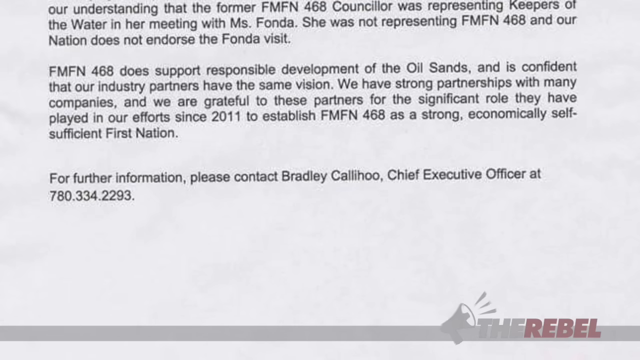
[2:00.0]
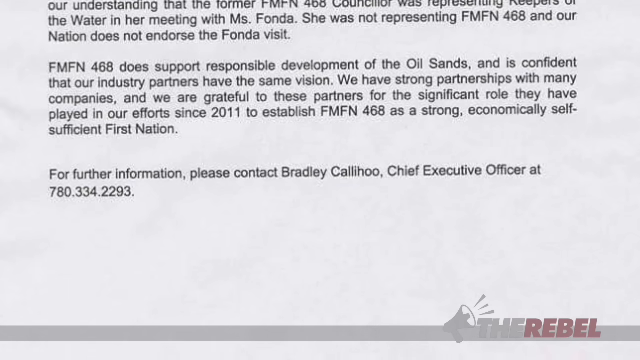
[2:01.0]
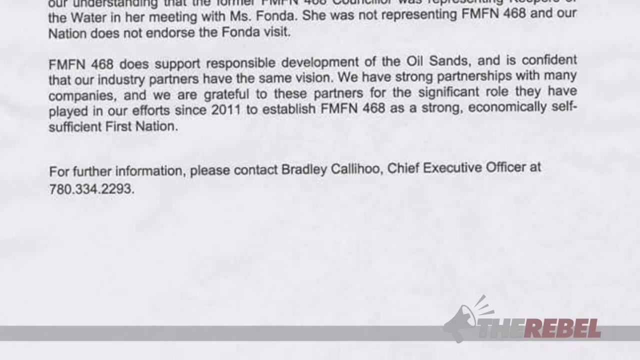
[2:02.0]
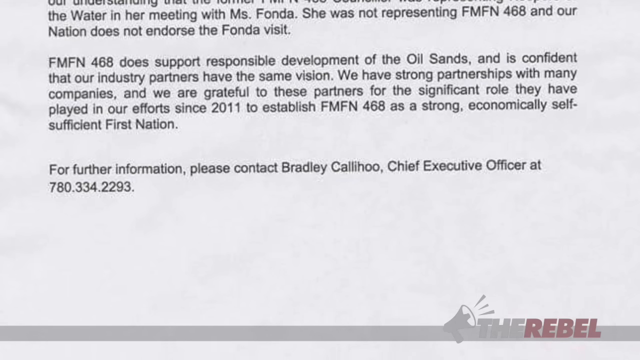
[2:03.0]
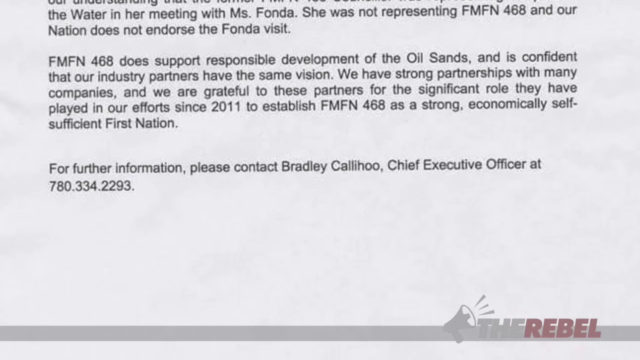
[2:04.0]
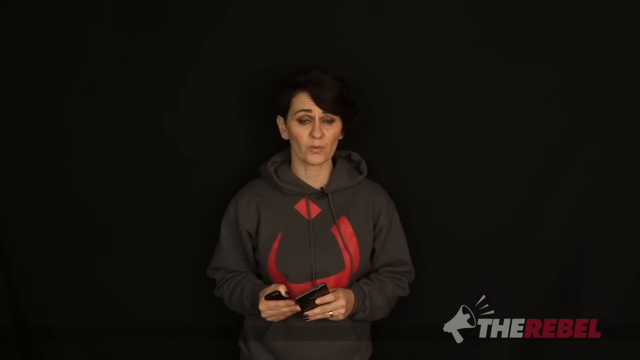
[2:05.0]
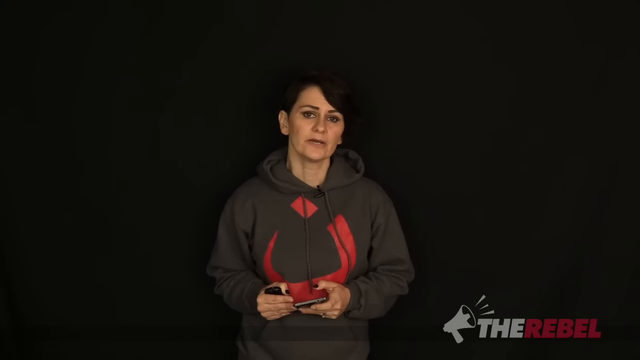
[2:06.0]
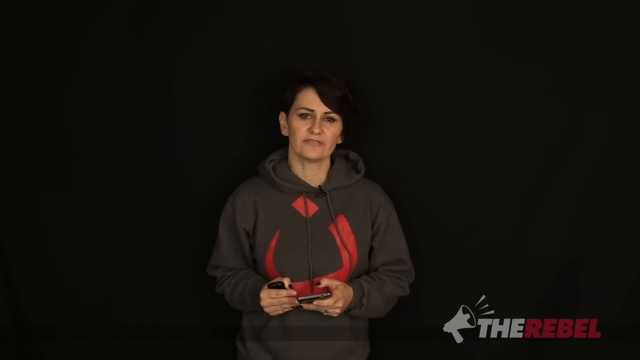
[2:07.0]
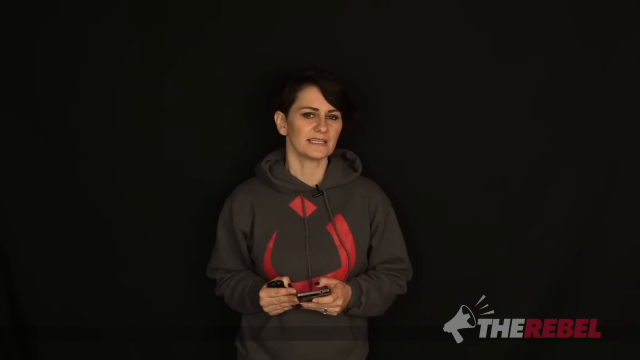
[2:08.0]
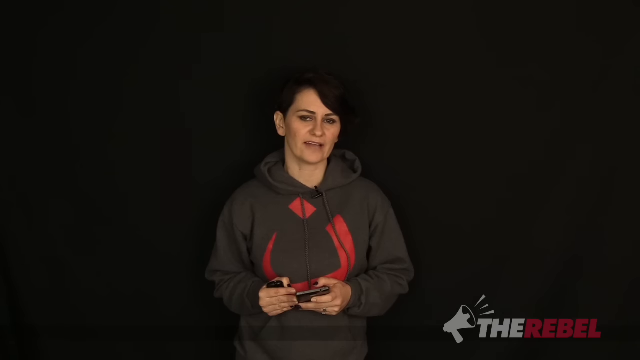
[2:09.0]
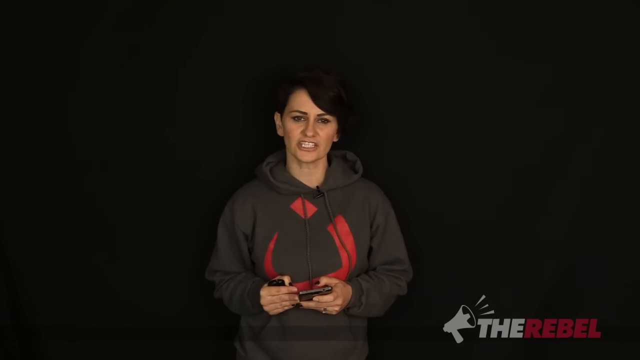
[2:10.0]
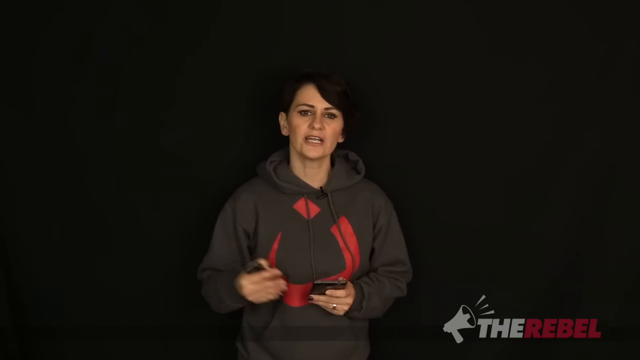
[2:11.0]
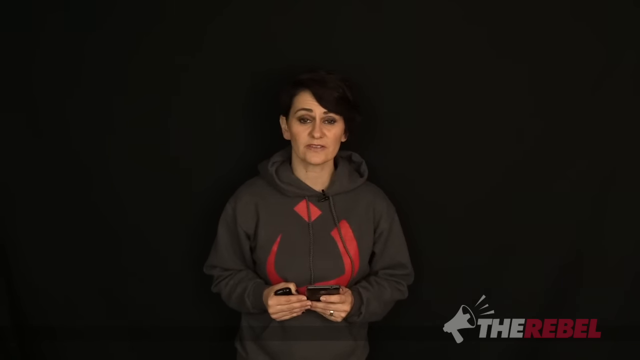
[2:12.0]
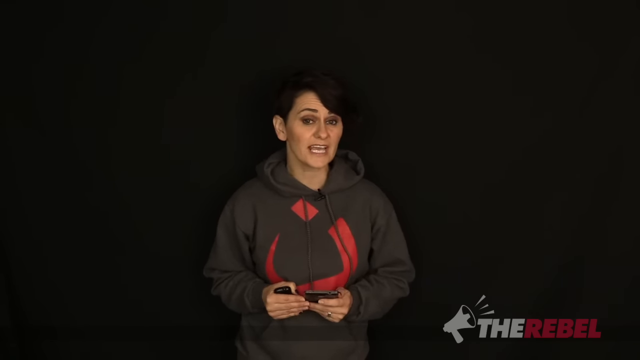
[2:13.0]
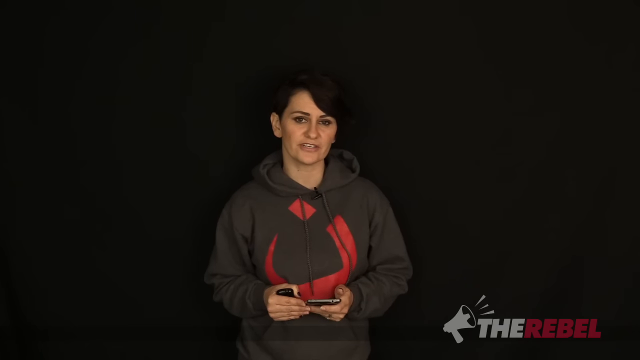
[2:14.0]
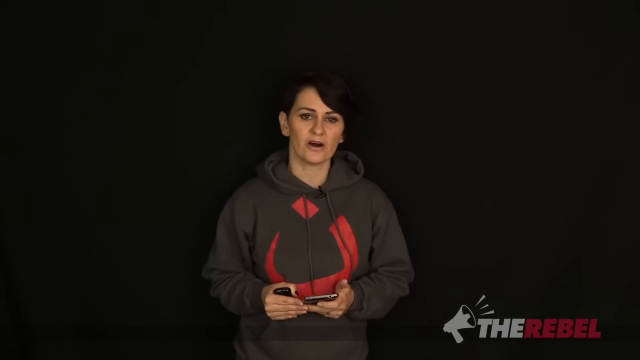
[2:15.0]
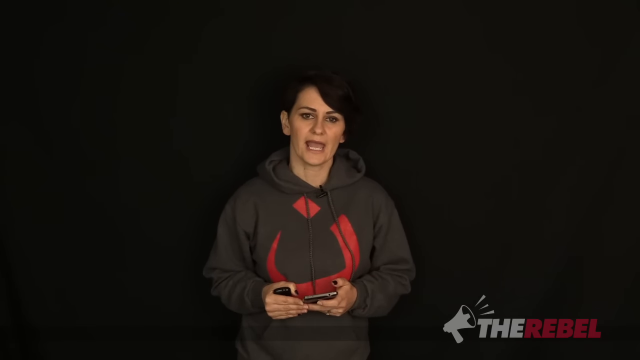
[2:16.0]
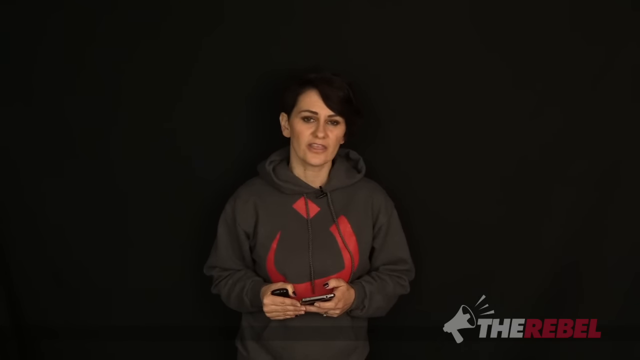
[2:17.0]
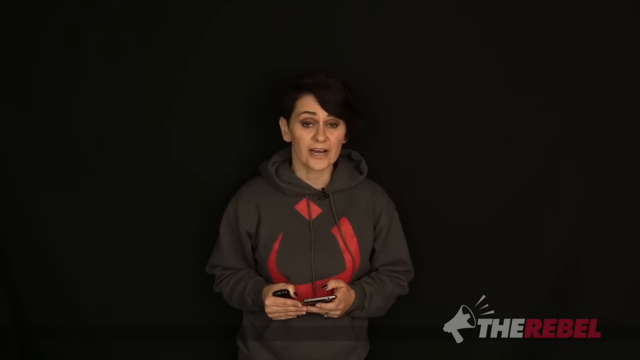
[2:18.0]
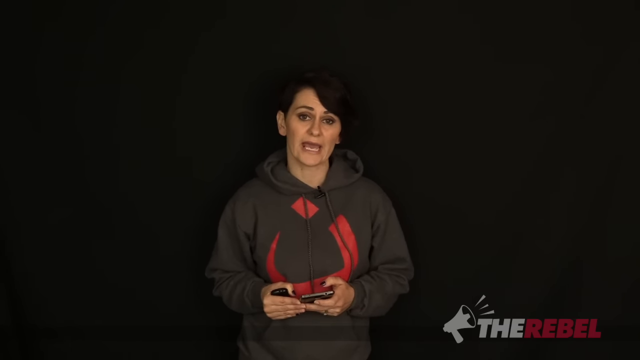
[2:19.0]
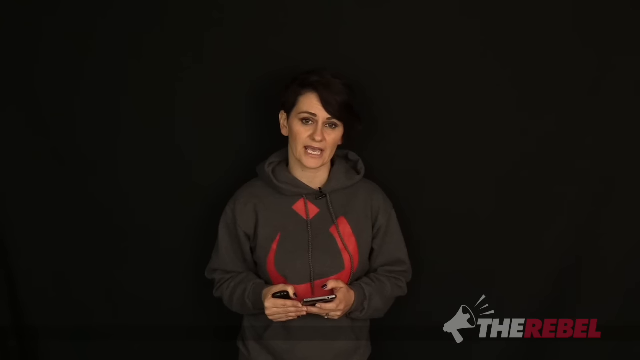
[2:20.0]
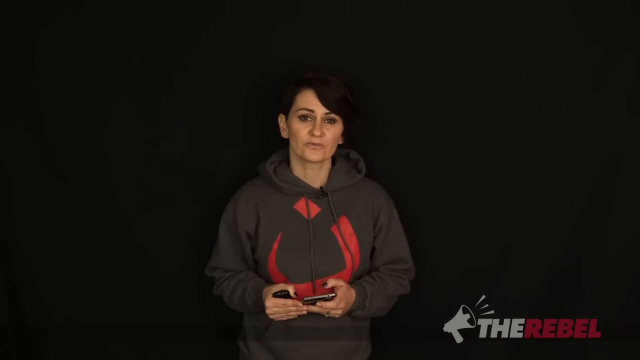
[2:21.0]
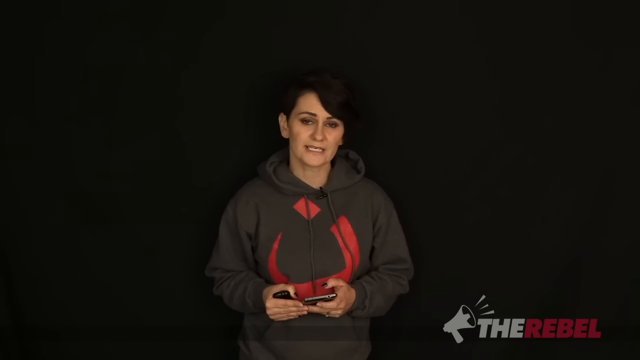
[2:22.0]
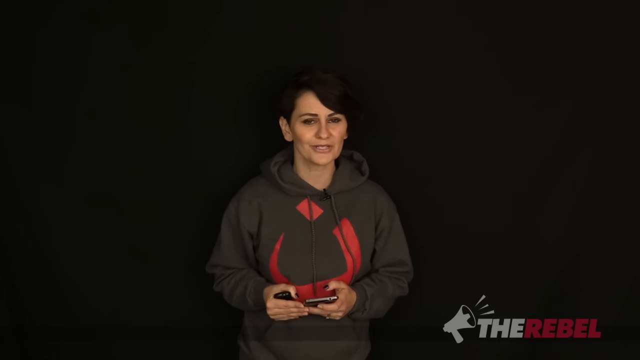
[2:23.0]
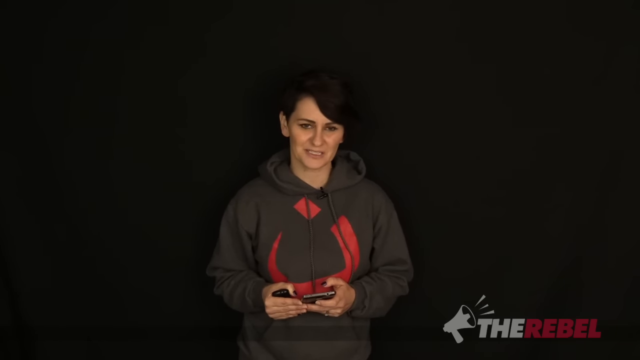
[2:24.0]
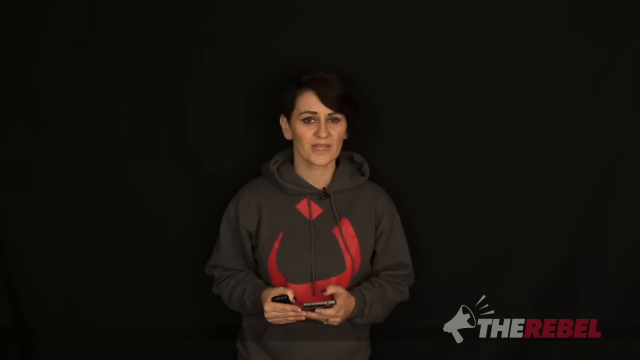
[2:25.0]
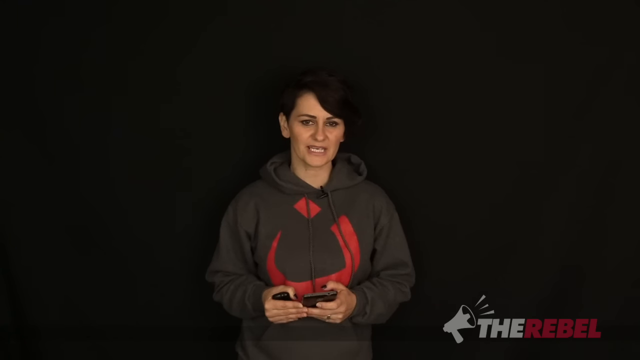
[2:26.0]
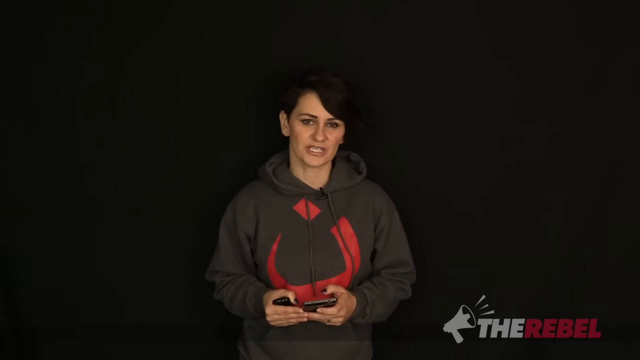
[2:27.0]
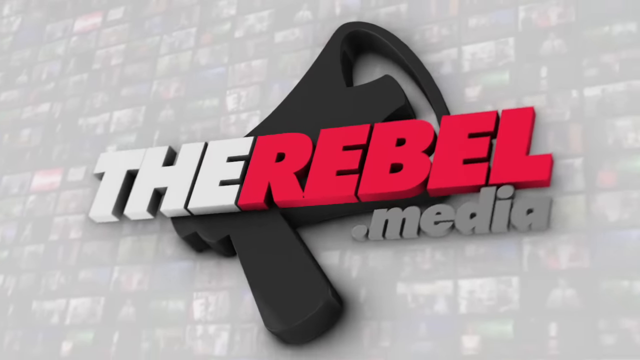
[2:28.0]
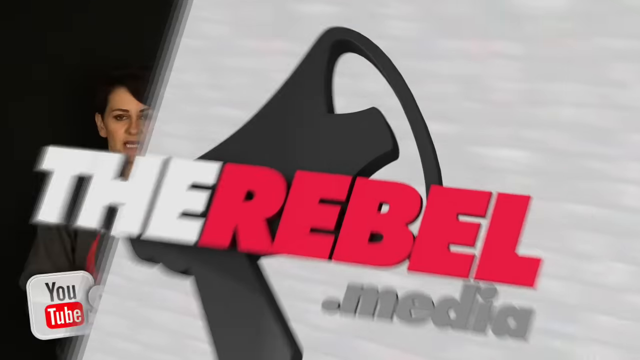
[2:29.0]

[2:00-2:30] The document ends with the "For Further Information" contact, the chief executive officer. The news anchor is then shown again, talking about the subject. She moves her body in a way that seems to add a personal opinion on what was read, seems angry, and appears to be making points and possibly making fun of the document. She holds a phone in her left hand and some kind of device in her right. She has a ring on one of the fingers of her left hand and black nail polish on her thumb and little finger, and she wears a microphone on her hoodie. She appears to wrap up the subject, and the ending of the video follows with what seems to be The Rebel Media logo.